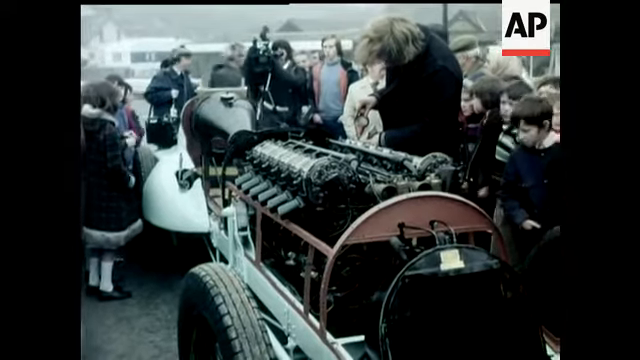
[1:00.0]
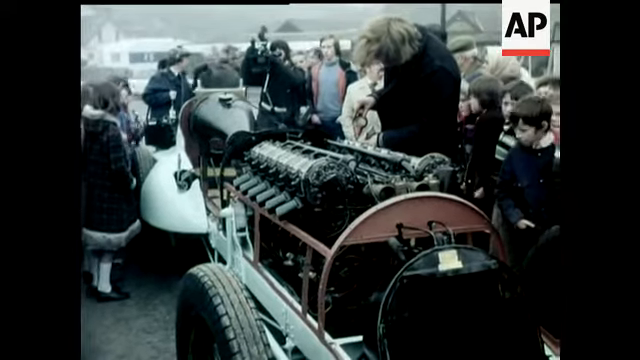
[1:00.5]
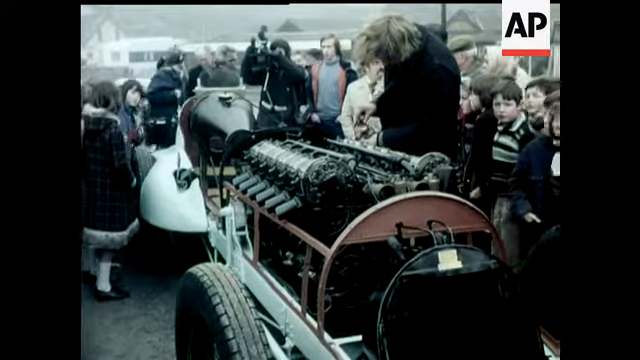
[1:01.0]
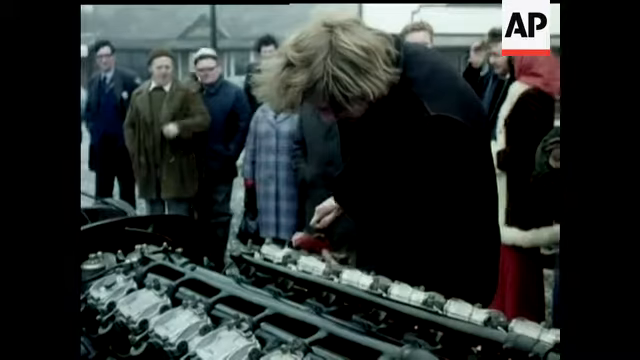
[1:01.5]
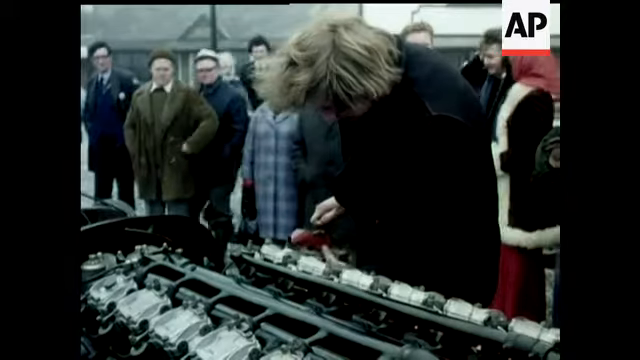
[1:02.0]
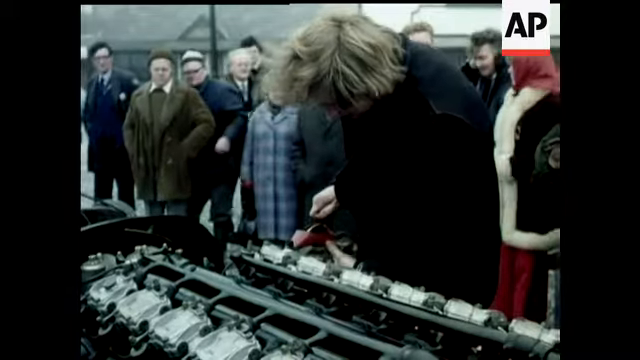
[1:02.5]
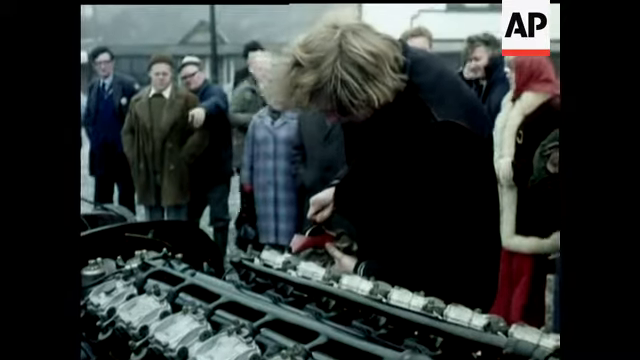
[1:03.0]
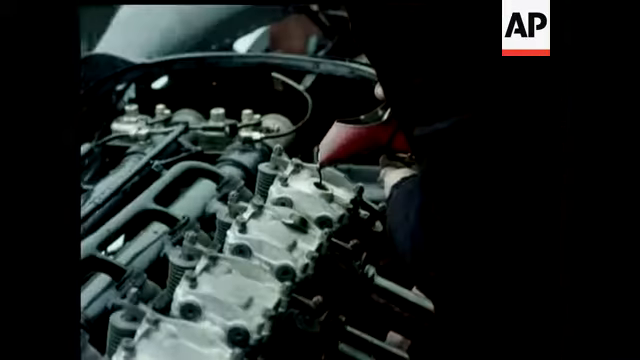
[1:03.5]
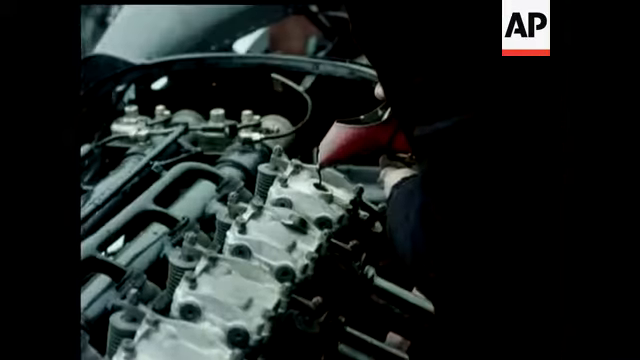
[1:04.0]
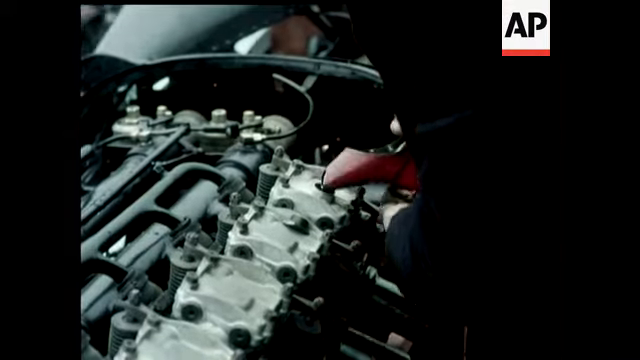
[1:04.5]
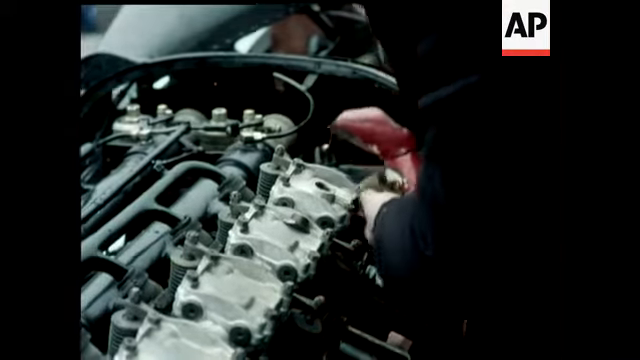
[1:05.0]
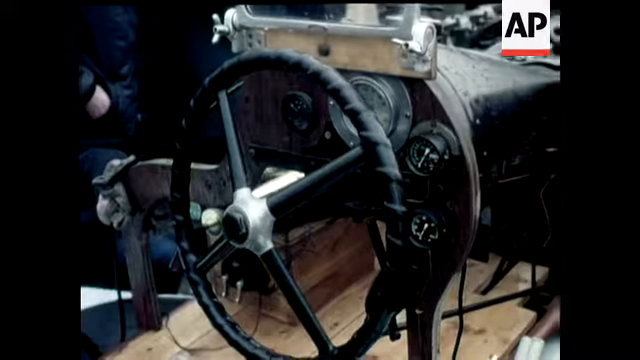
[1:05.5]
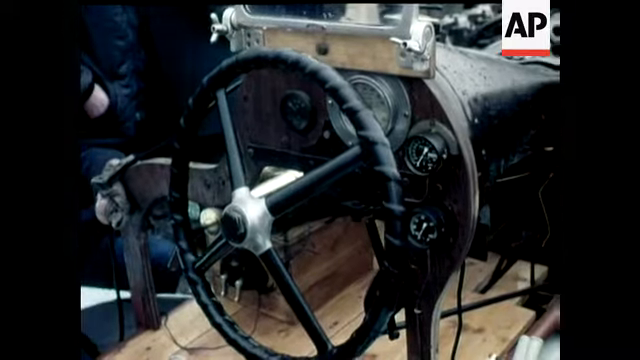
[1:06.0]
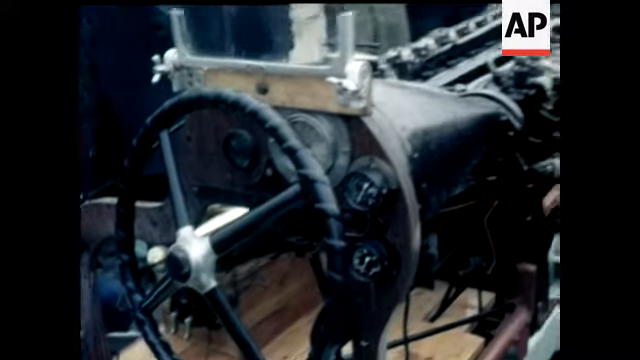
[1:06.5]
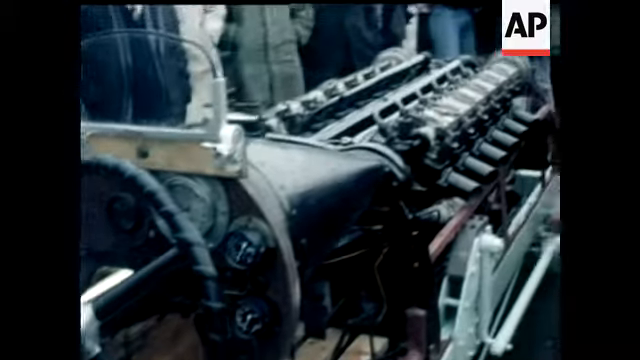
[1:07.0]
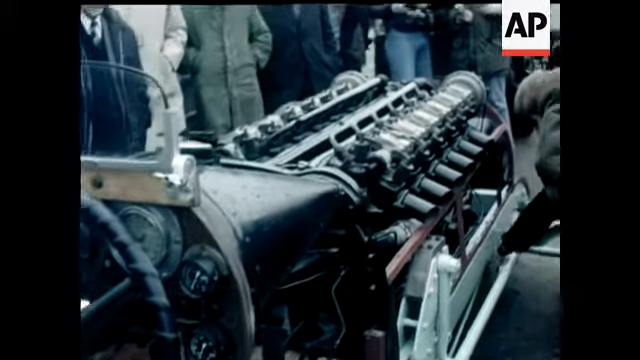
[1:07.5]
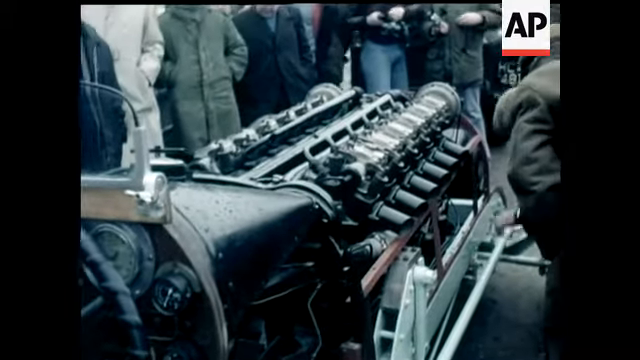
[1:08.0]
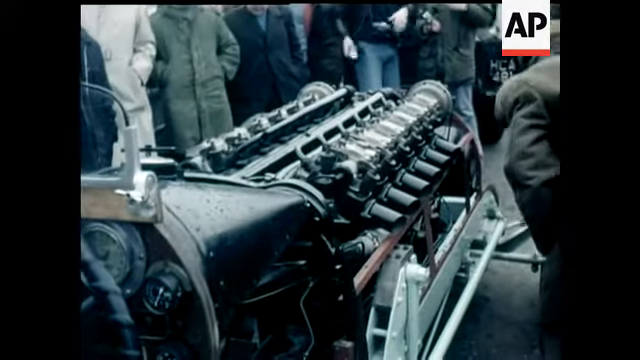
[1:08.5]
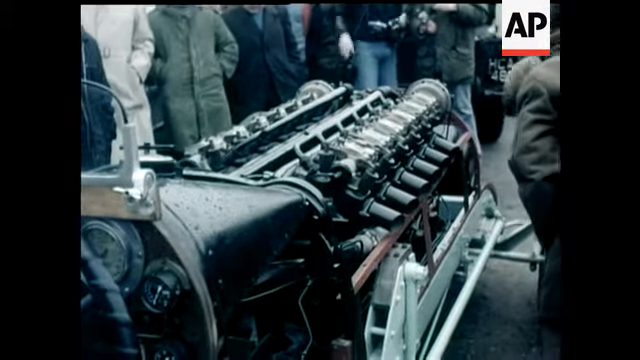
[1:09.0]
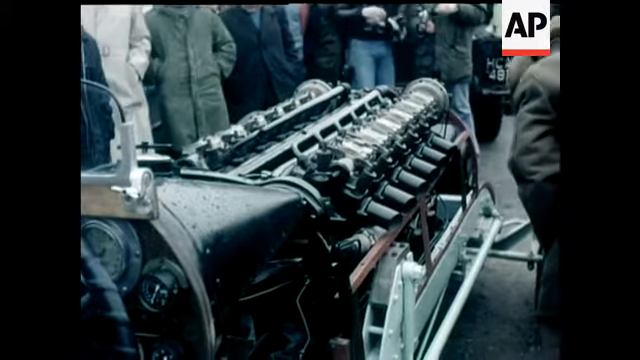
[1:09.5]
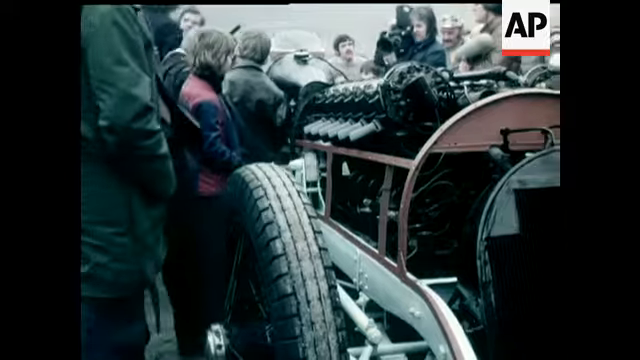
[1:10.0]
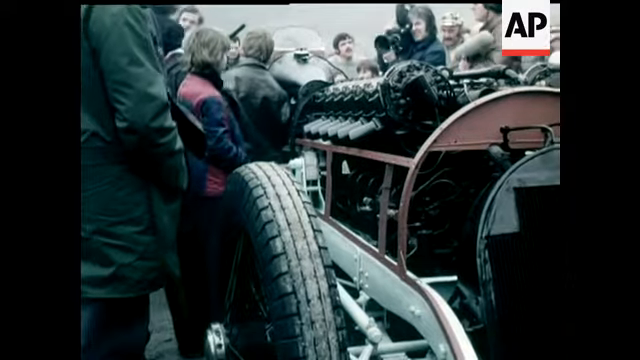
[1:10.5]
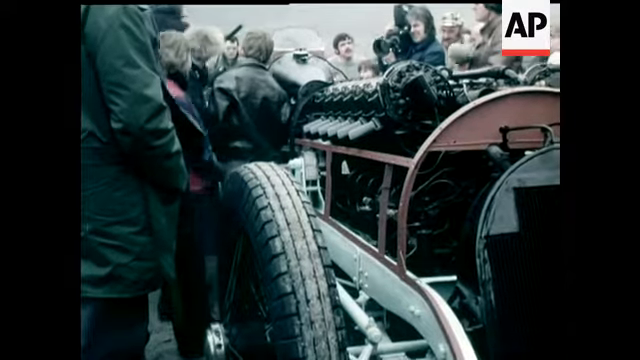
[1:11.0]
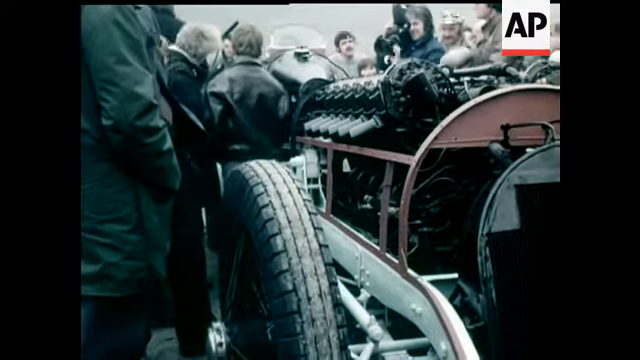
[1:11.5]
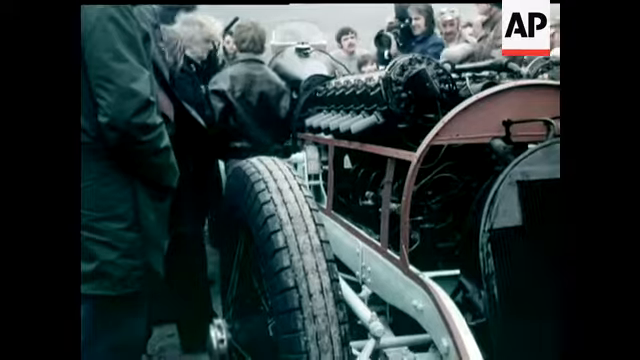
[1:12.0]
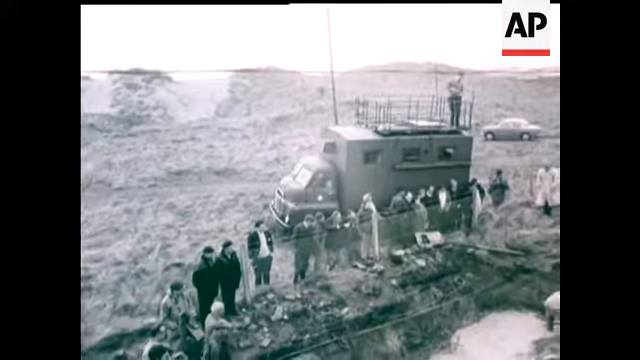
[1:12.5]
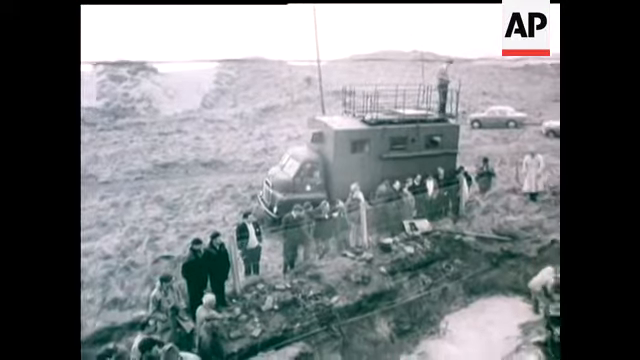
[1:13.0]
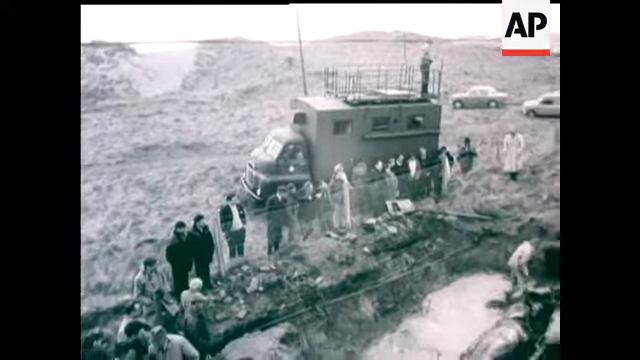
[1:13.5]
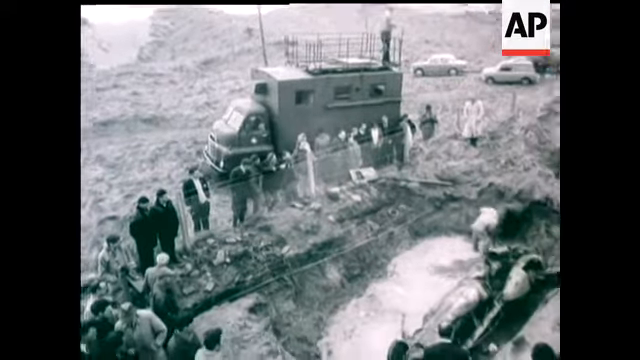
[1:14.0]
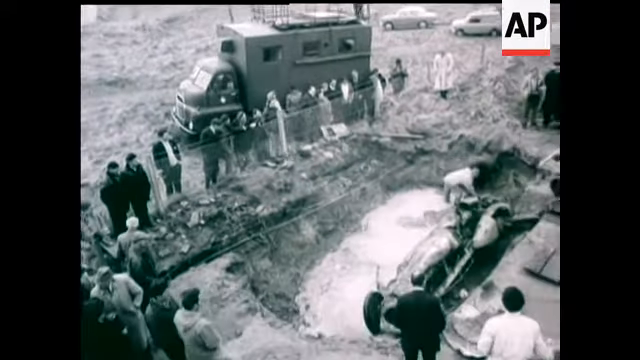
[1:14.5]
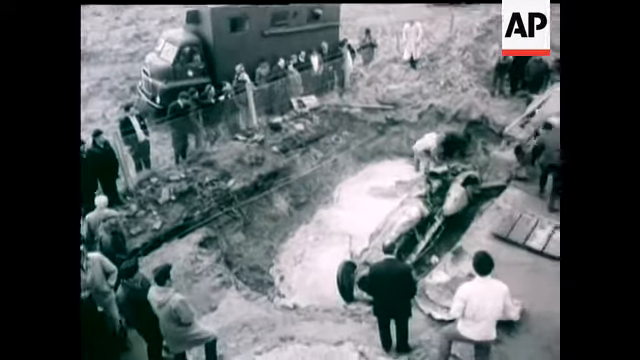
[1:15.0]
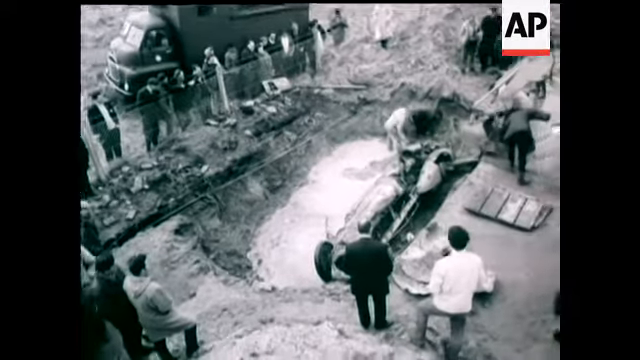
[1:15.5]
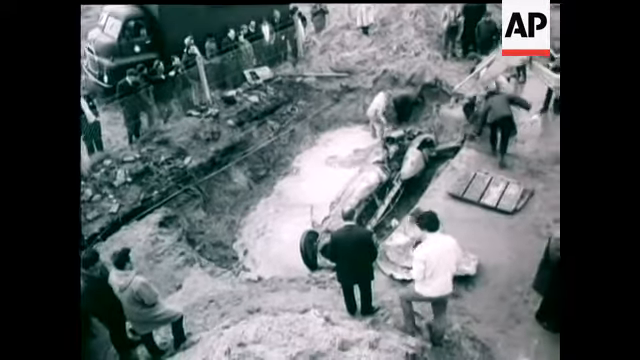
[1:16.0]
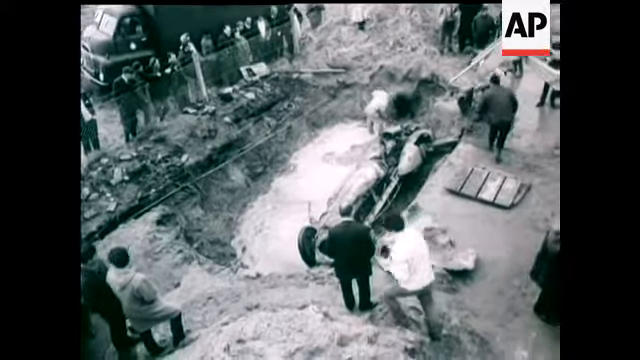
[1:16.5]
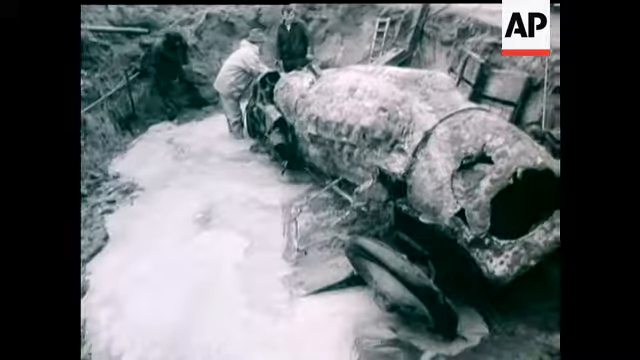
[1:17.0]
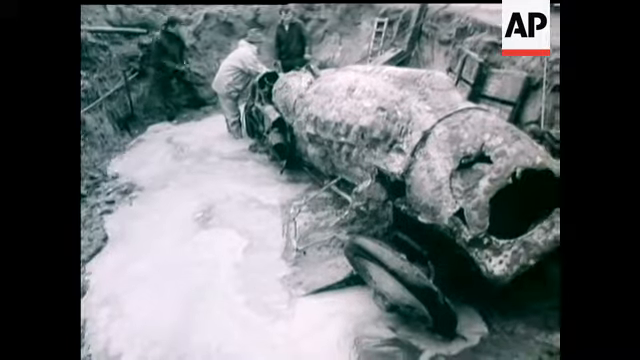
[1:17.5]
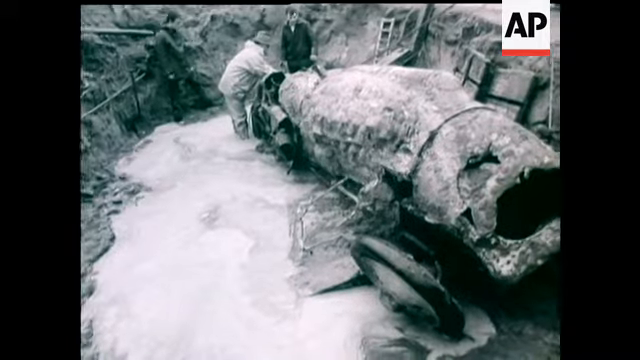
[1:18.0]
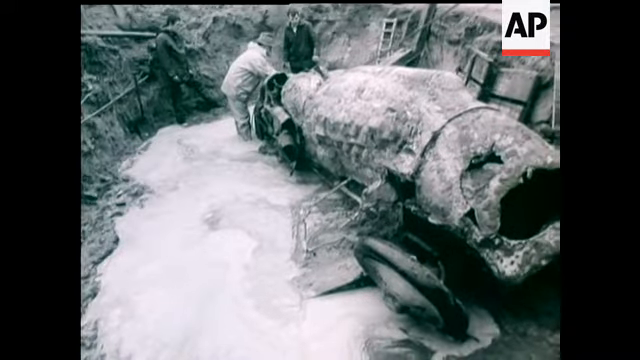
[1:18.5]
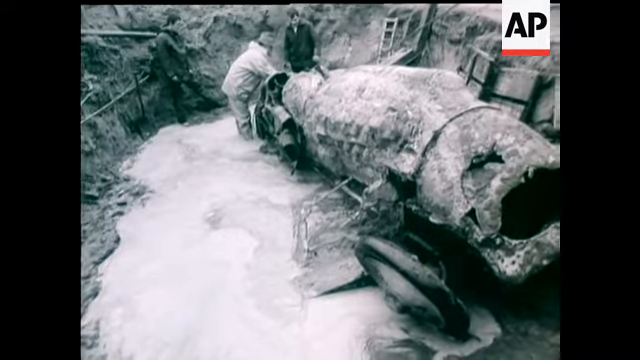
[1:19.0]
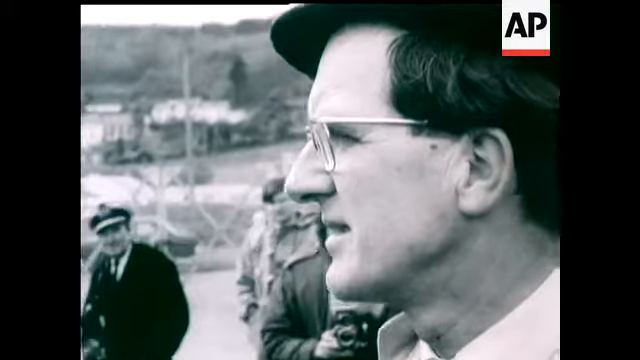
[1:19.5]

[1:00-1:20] A close-up shows the vehicle while someone appears to pour gas oil into the cylinders. A close-up of the steering wheel follows, and someone looks at the wheels near the front. There is a little bit of color in the footage. People surround this large rocket car. Another view shows what looks like the rocket car inside a mud pit, as if it had been on fire. It looks mangled, and people are all around the mud pit. People with shovels surround it as if trying to dig it out of the ground. There is a piece of wood under it, and it has no wheels. Finally, a close-up shows a man in a collared shirt and tie looking on; he wears glasses and a hat.